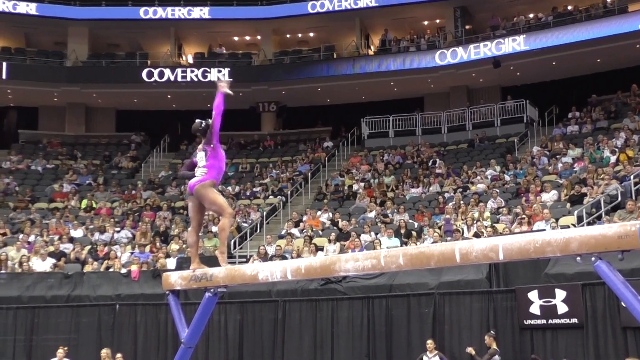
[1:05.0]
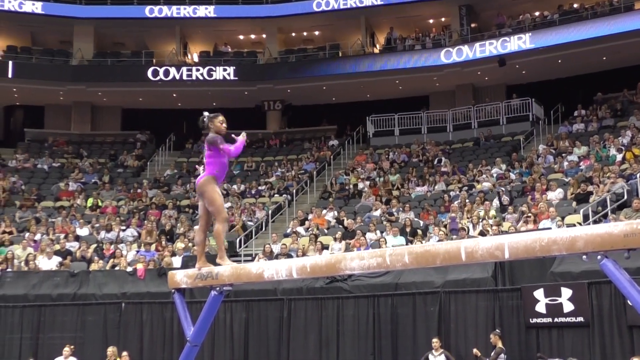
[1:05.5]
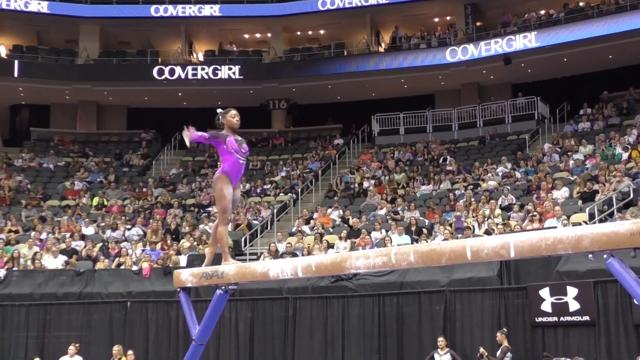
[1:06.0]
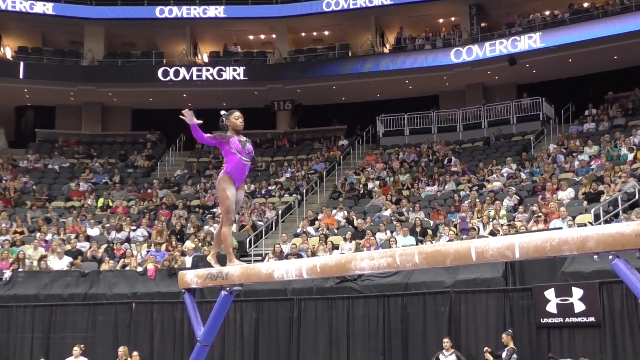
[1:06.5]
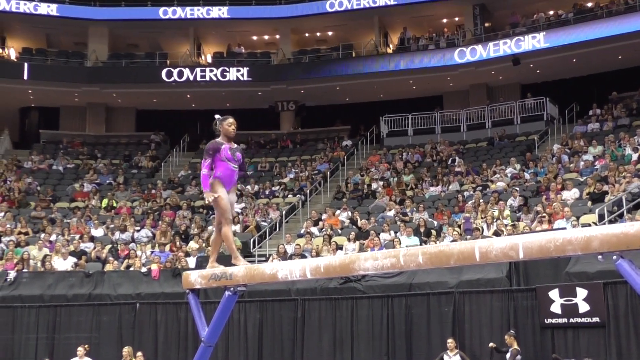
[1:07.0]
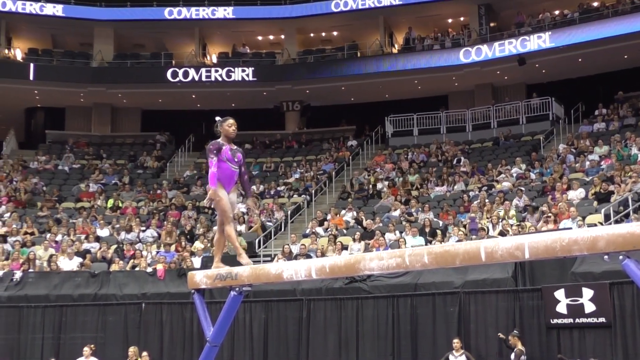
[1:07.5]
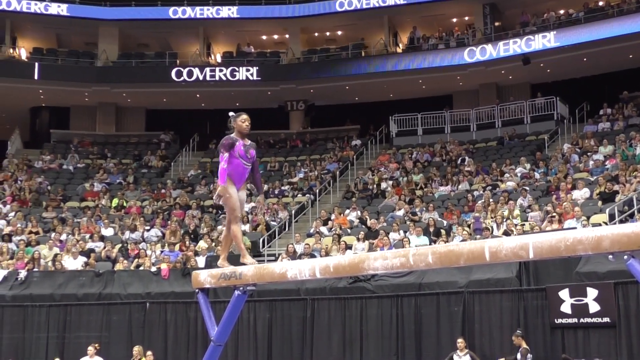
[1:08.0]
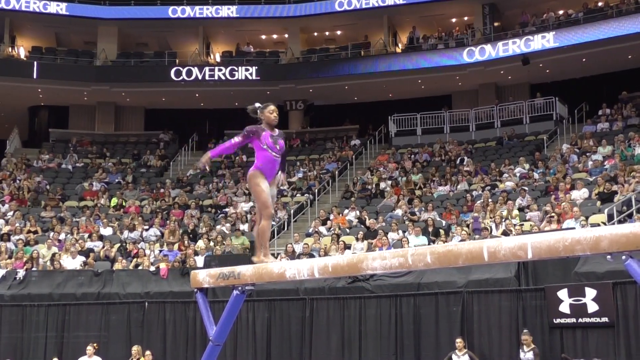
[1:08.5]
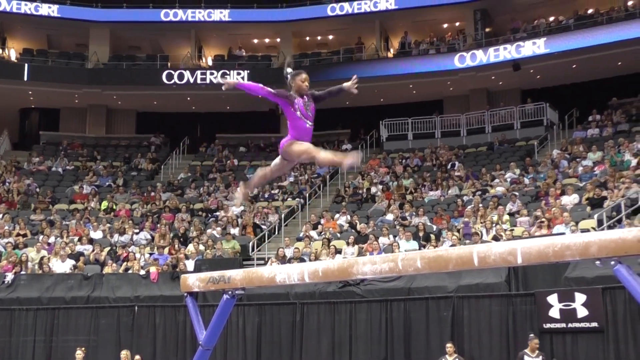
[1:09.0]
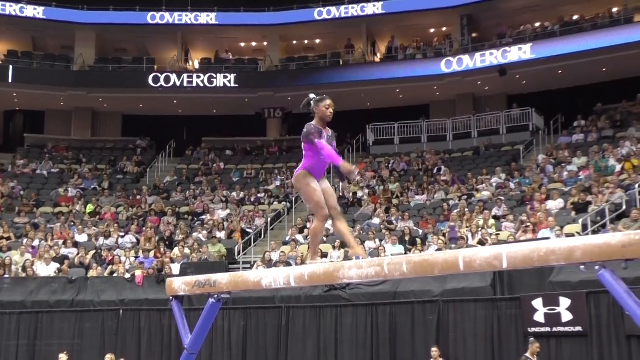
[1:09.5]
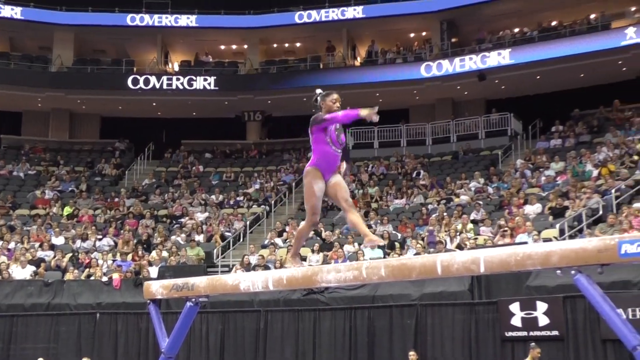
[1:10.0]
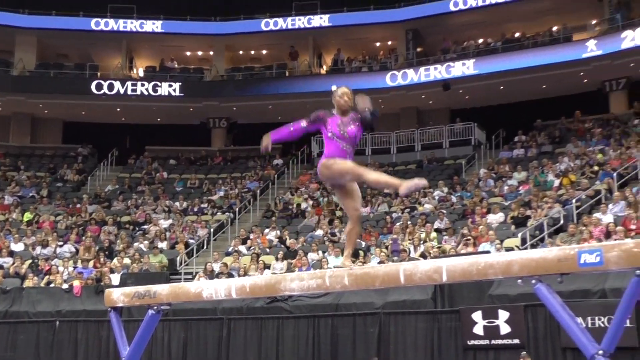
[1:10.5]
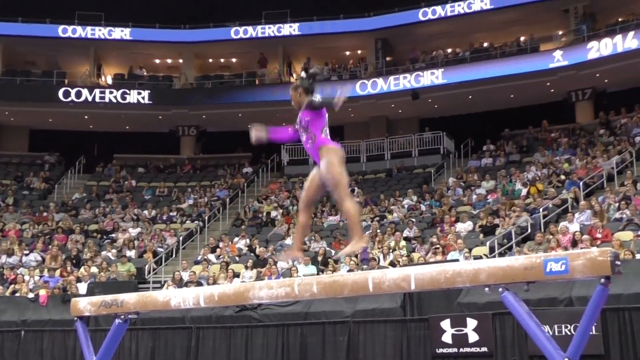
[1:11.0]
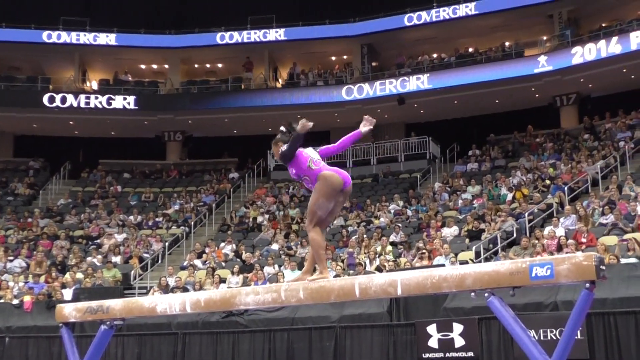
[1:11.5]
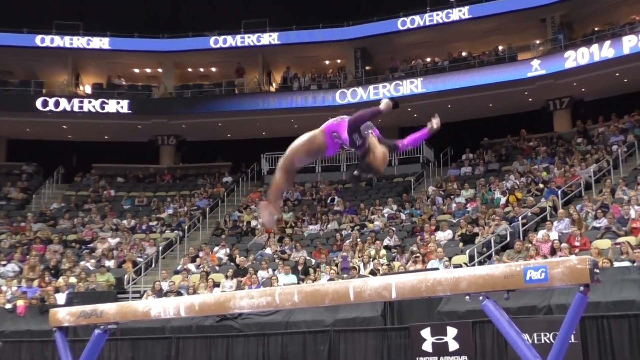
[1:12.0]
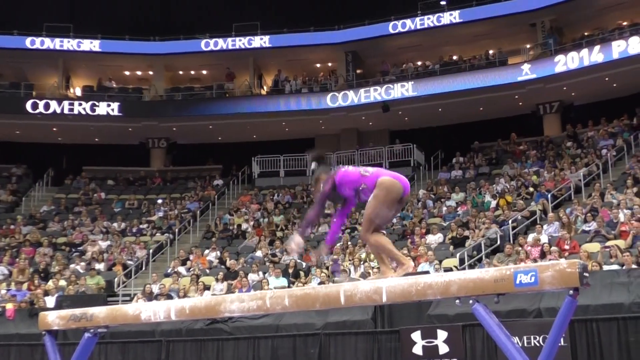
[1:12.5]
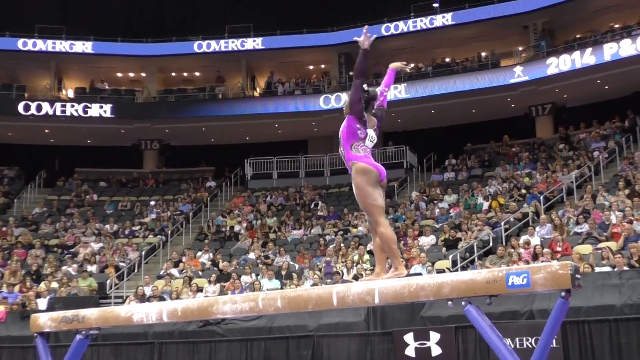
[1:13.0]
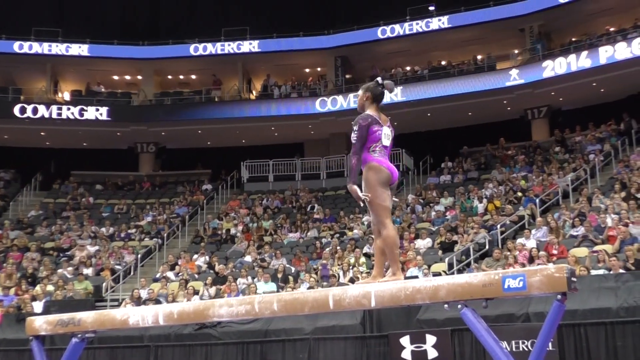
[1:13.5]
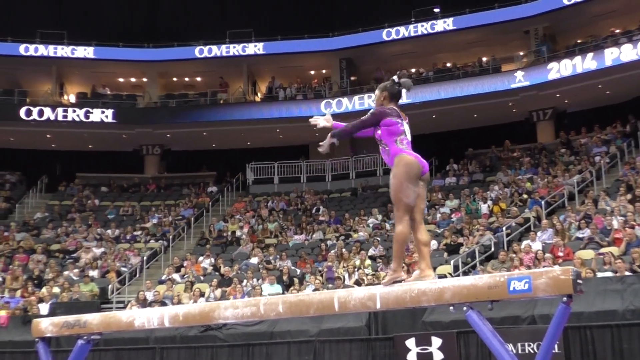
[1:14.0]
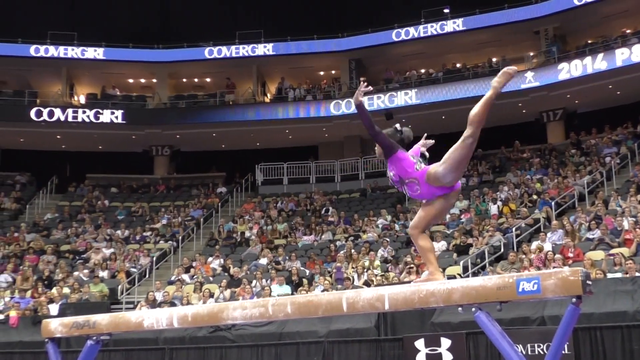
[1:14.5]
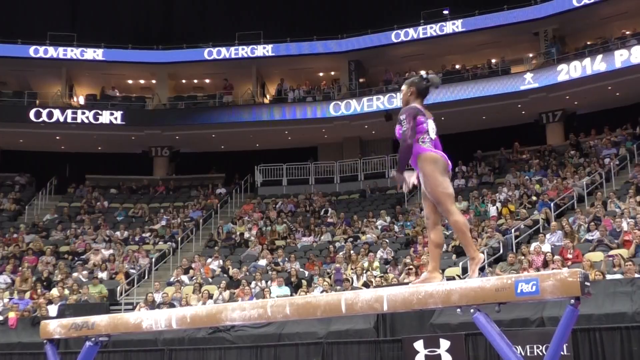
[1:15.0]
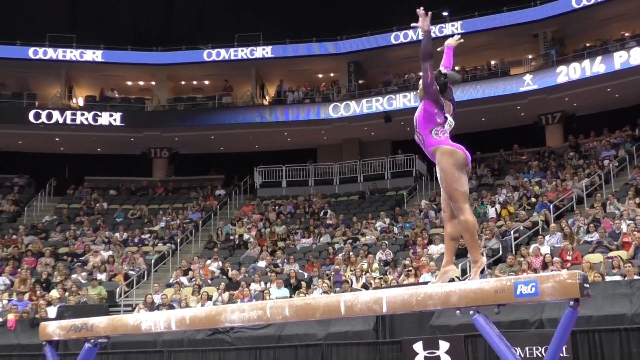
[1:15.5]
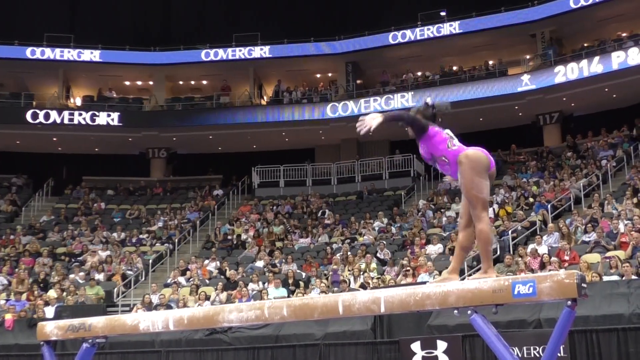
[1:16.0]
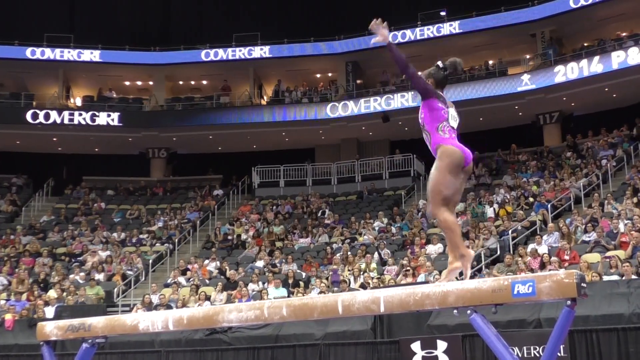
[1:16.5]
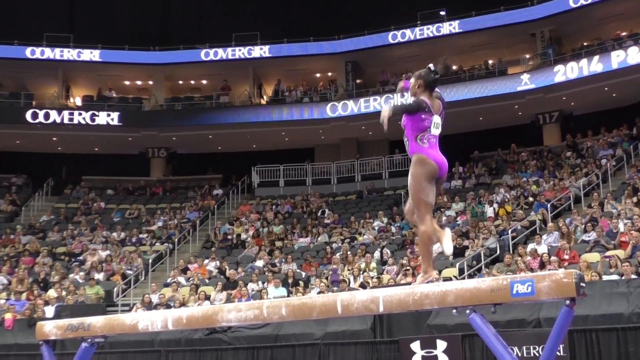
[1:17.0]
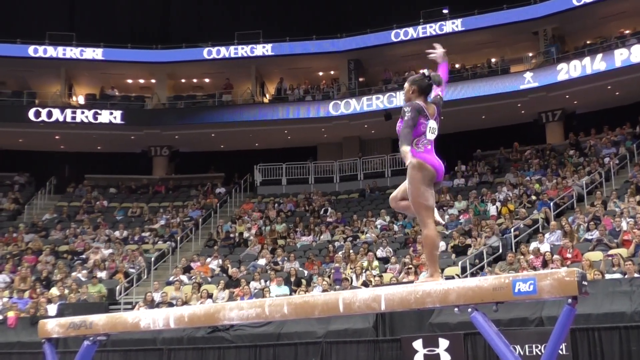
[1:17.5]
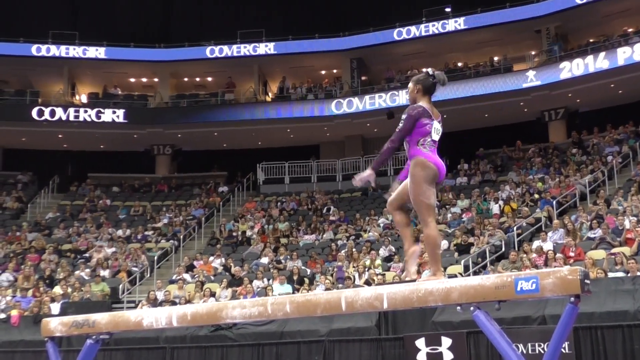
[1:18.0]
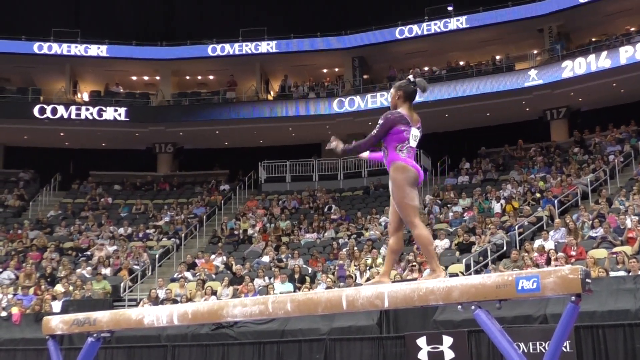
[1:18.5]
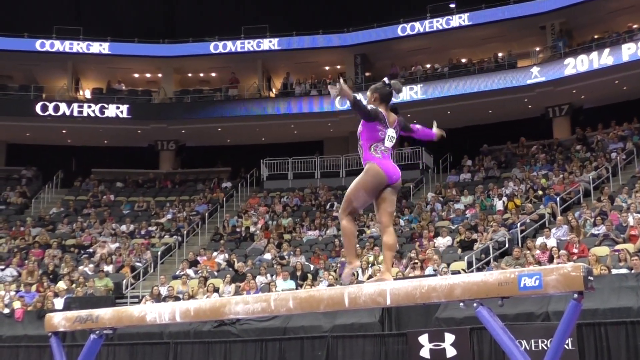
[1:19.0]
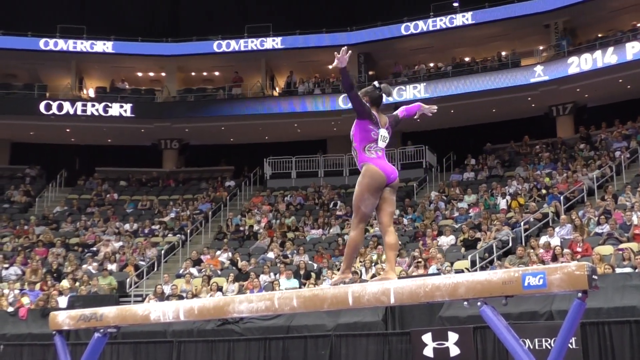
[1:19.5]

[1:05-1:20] She does a couple more long poses with her arms, then jumps into a split leap followed by another in which she changes direction on the bar, and immediately goes into a single backflip followed by a pose with one leg long behind her. In between there are poses with both hands above her head, little bows and dips, and moments where she brings one leg bent up to her other leg. She begins to walk toward the other side of the beam, possibly setting up another big move. Her posture is very straight, and in moments when she uses her arms, her back becomes more arched and flexed. The video sometimes focuses more closely on what she is doing but doesn't show much of the audience's reaction.